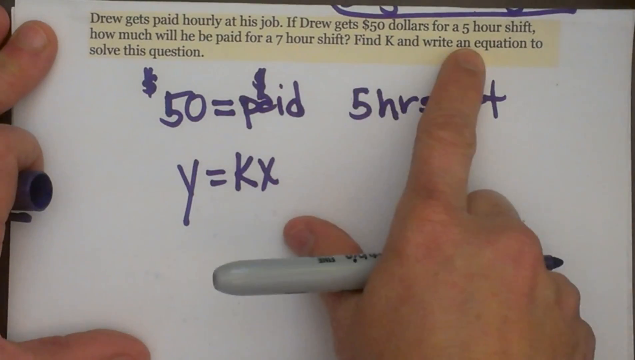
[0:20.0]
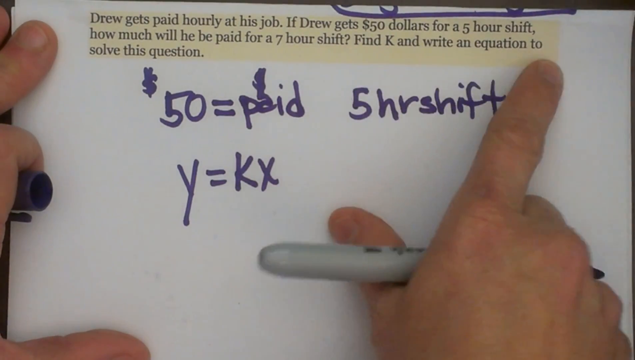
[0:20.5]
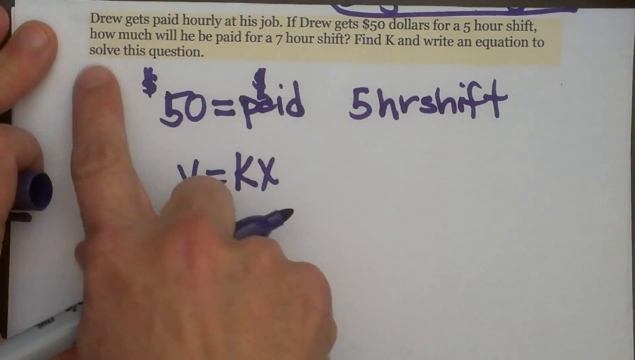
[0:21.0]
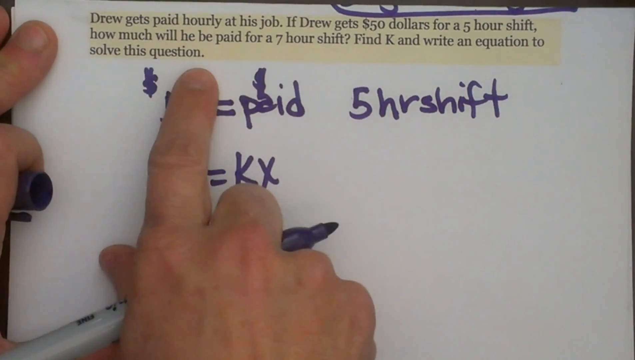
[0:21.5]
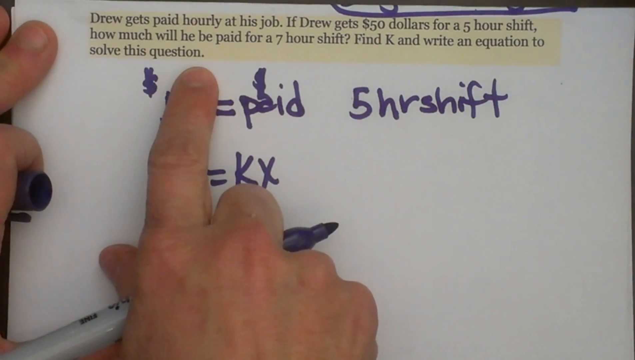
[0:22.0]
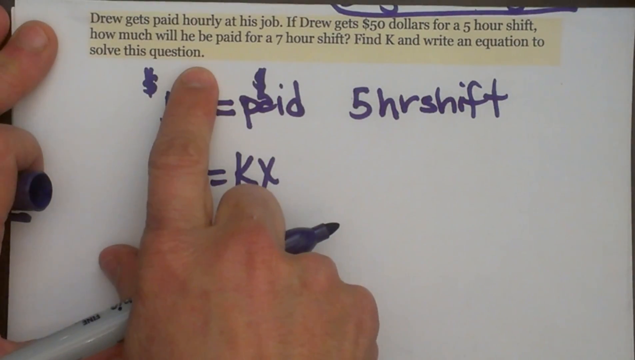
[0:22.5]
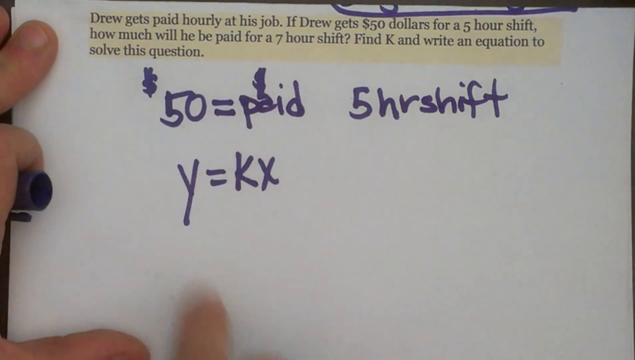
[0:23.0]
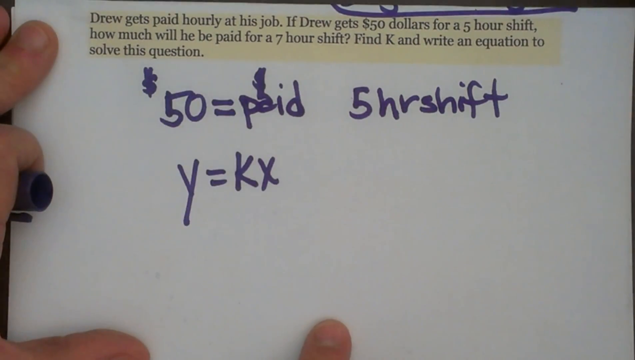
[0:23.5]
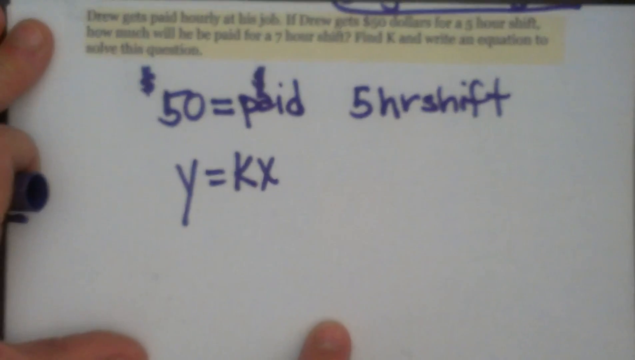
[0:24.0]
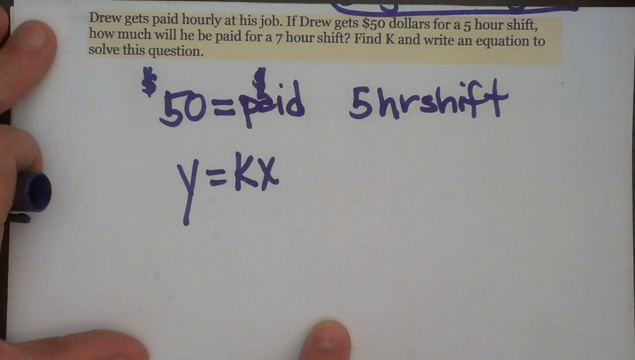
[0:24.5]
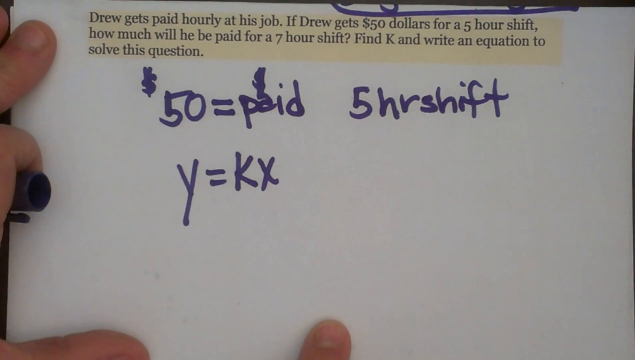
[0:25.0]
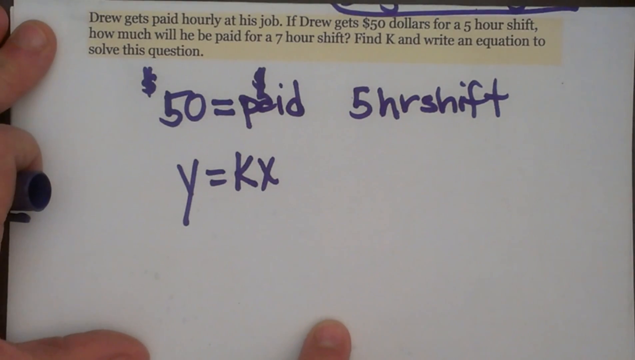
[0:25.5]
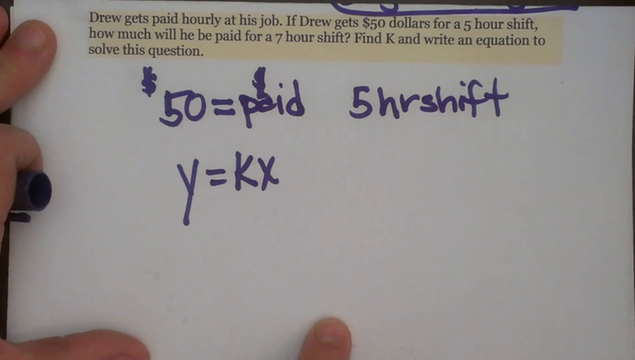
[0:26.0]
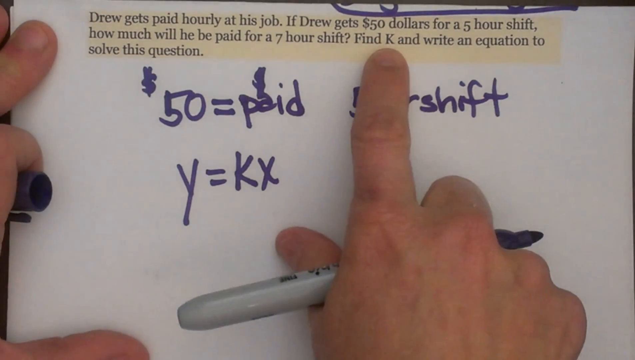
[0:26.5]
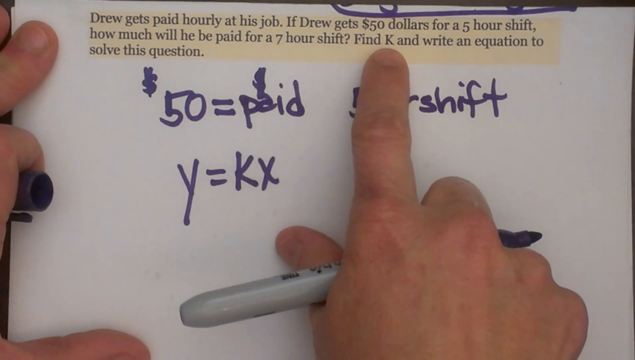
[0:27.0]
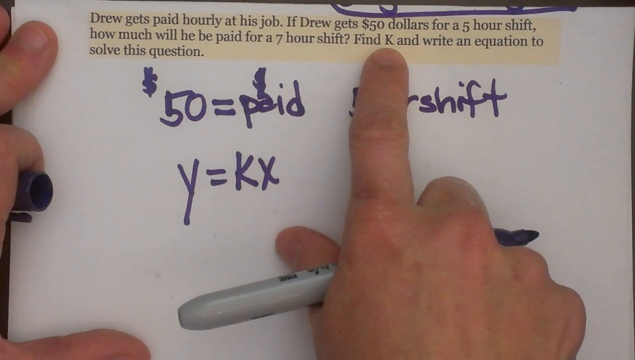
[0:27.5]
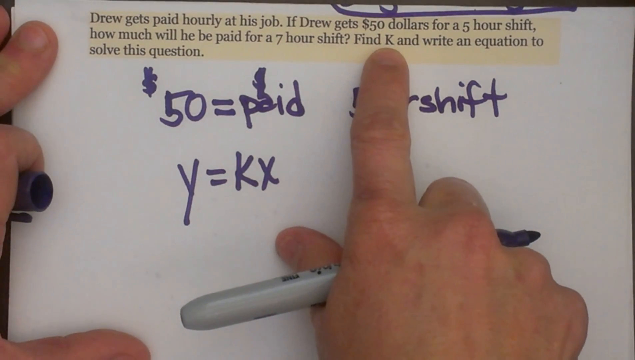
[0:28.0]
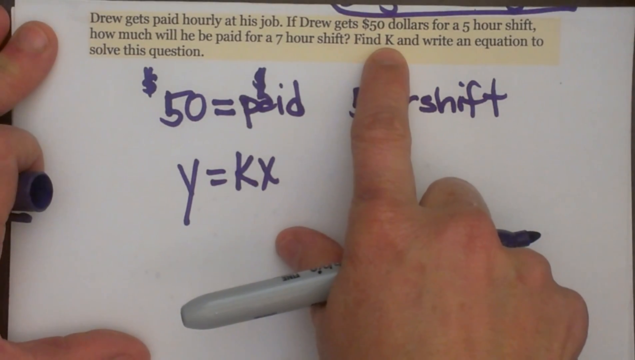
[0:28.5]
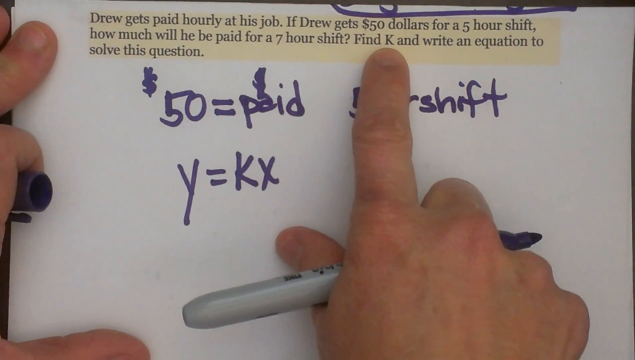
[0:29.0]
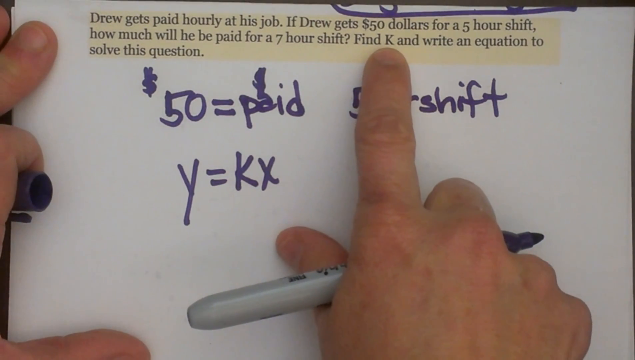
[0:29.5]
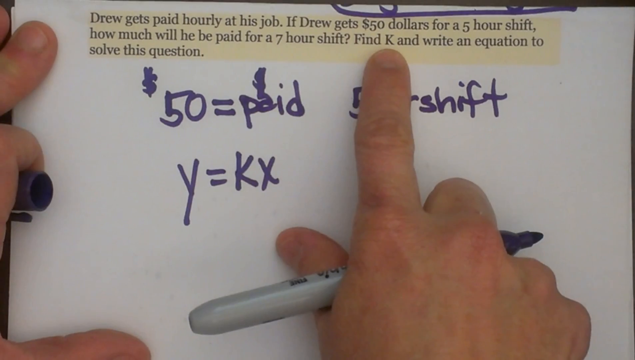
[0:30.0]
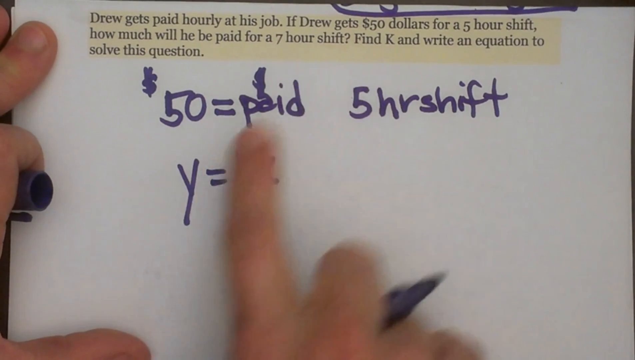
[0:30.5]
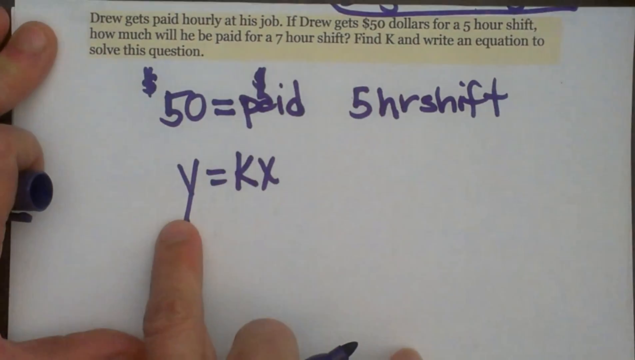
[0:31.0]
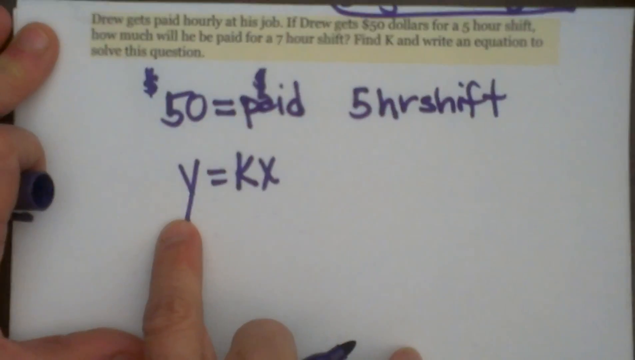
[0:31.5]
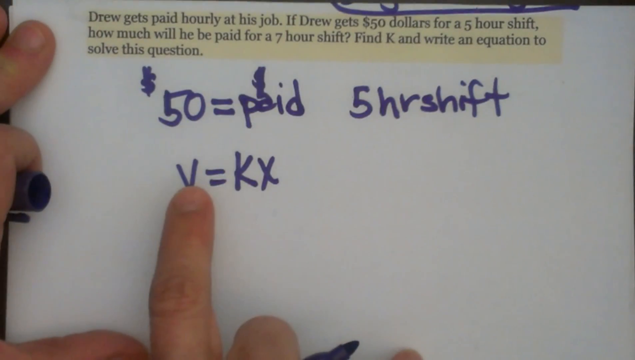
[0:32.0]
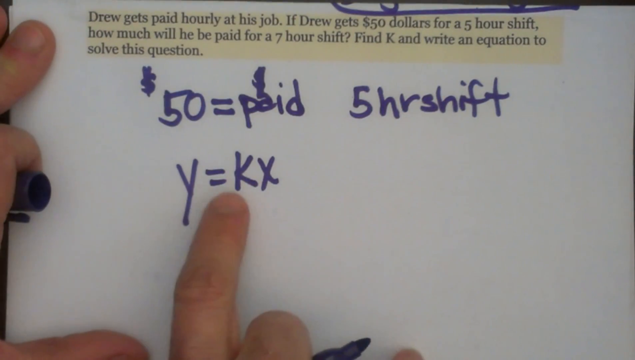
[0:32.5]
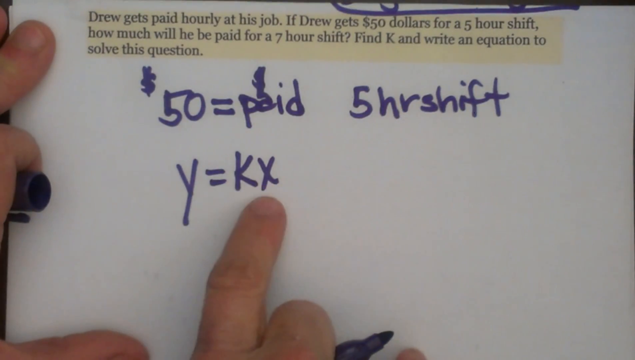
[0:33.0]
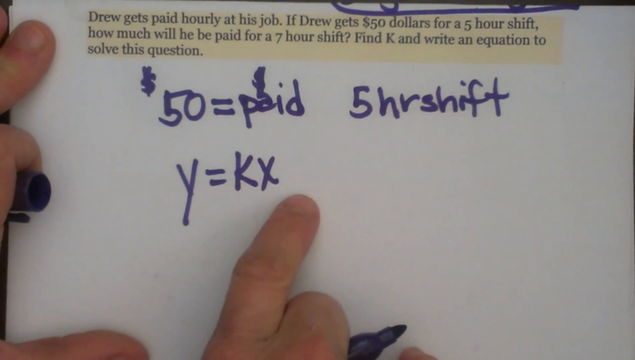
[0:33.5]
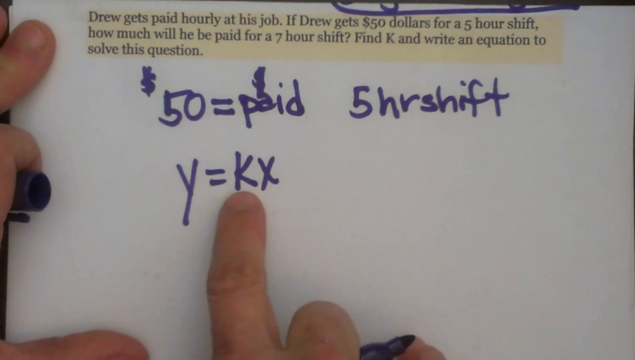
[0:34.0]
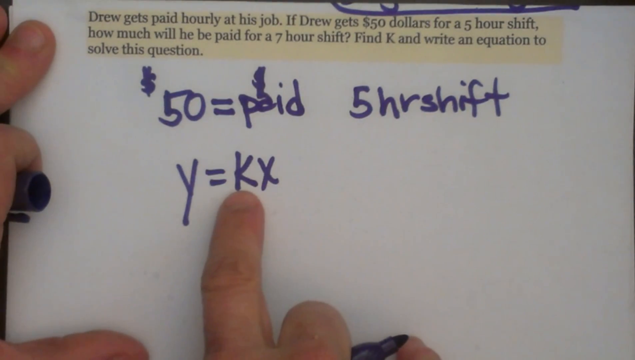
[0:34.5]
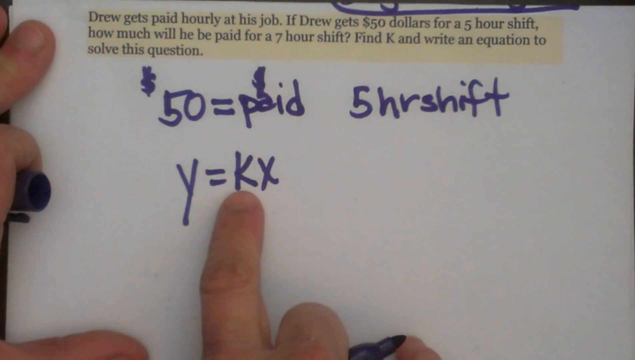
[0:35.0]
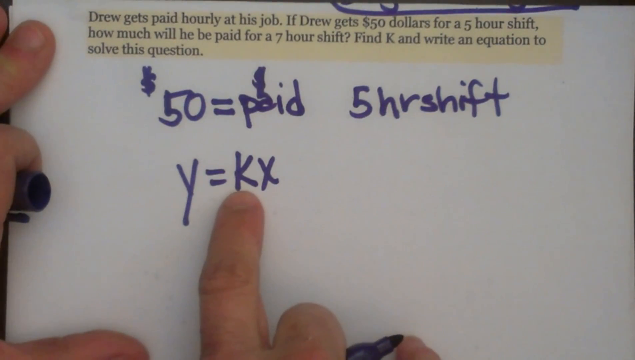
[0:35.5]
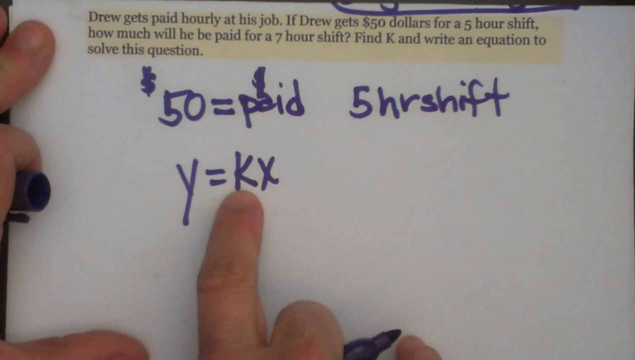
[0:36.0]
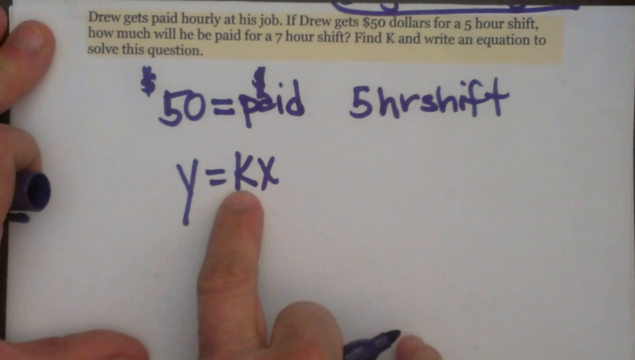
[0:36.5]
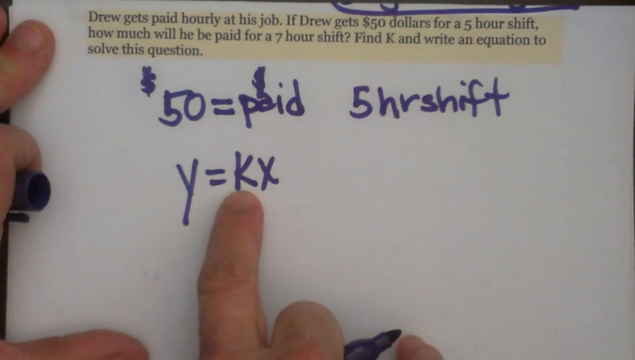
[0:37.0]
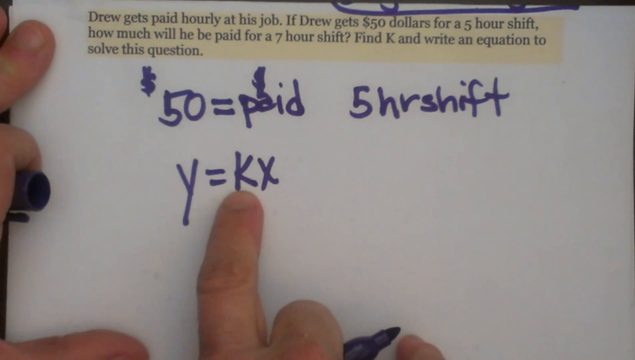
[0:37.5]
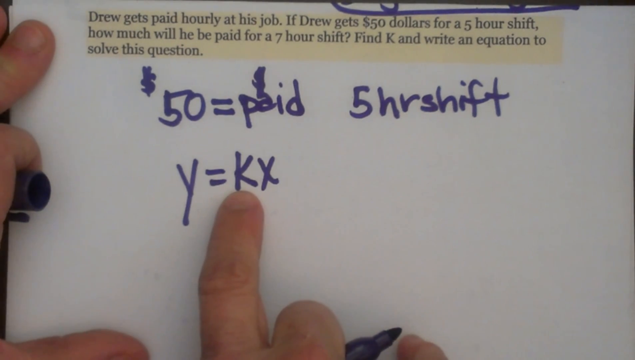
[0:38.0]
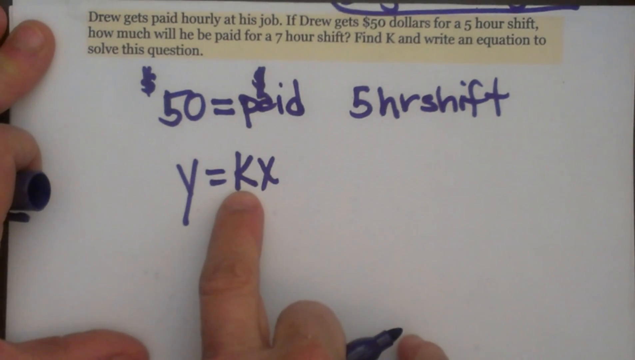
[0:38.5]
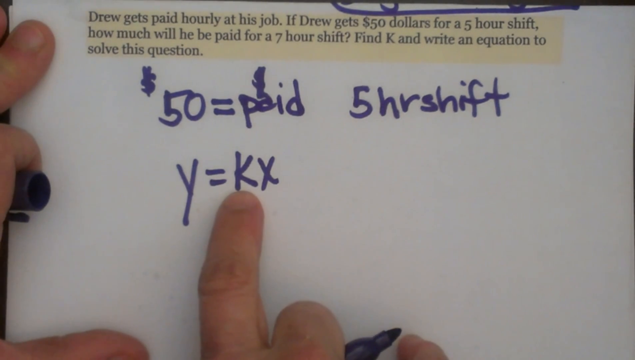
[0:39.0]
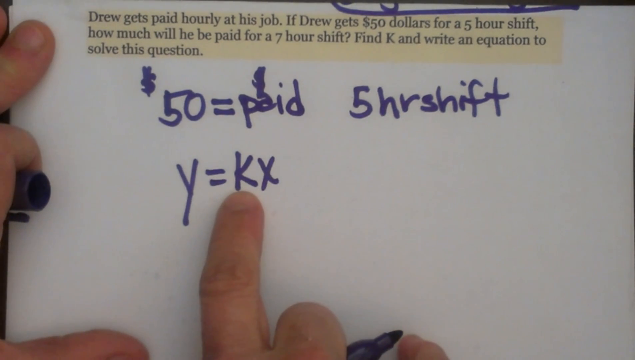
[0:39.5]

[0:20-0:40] The person reading the paragraph moves the right index finger from left to right. Written in Sharpie marker, which was held in the right hand, are "$50 = paid" with a little scribble above the A, "five hour shift" and "Y = KX". The finger goes under "find K" and under the written Y = KX, then back to the K, where it holds. Next the finger goes under the word "an" and holds there for a while, then under "equation to solve this question." The camera moves back and then forward a little, as the white page is seen to adjust. The left hand stays on the left side of the paper the whole time. A circle at the top is drawn in the same Sharpie marker.